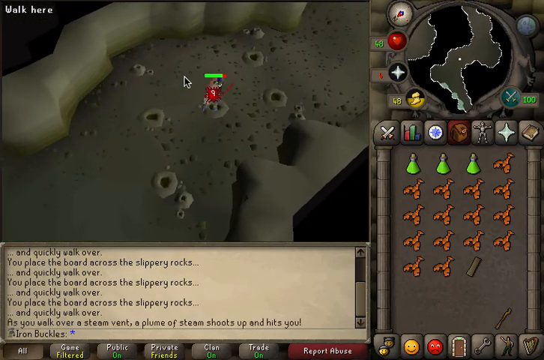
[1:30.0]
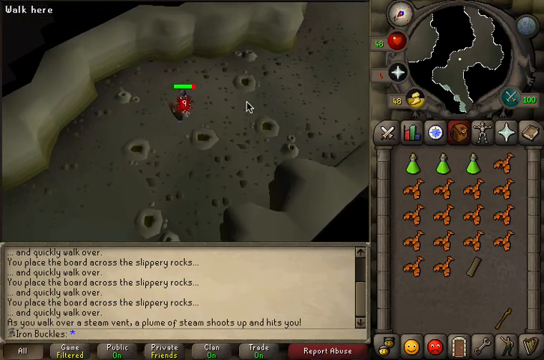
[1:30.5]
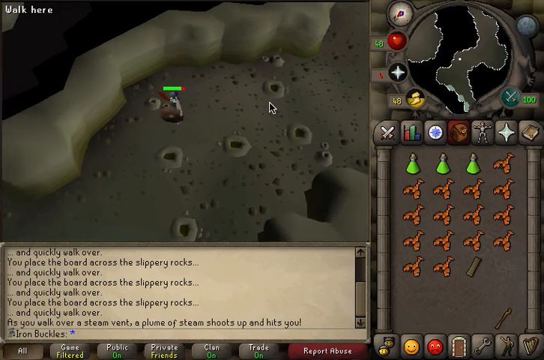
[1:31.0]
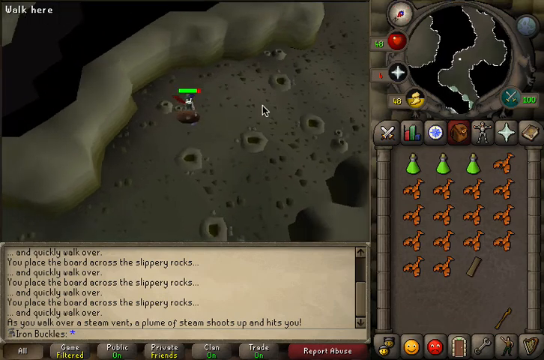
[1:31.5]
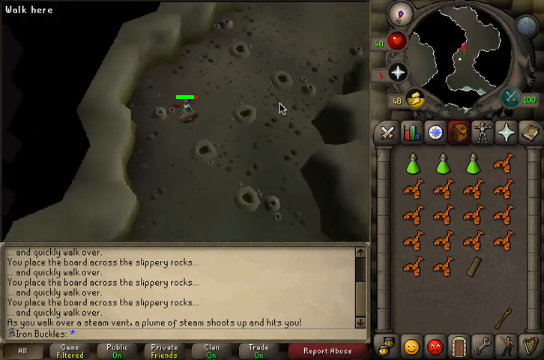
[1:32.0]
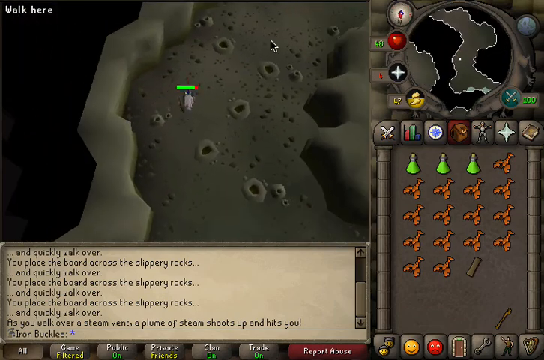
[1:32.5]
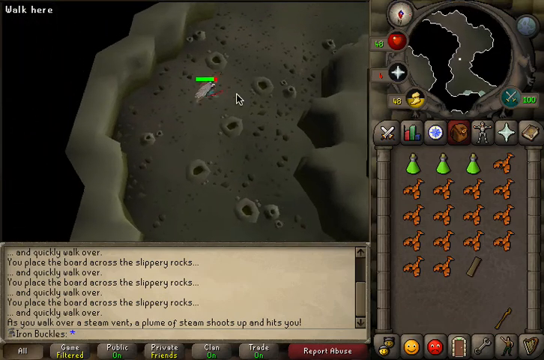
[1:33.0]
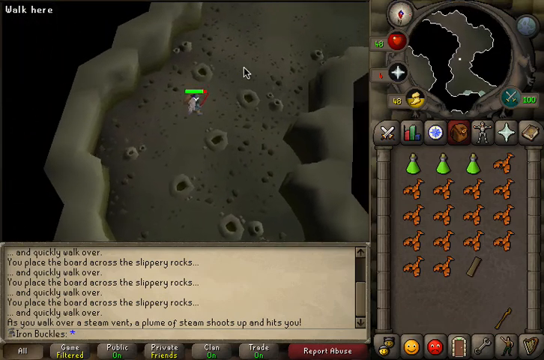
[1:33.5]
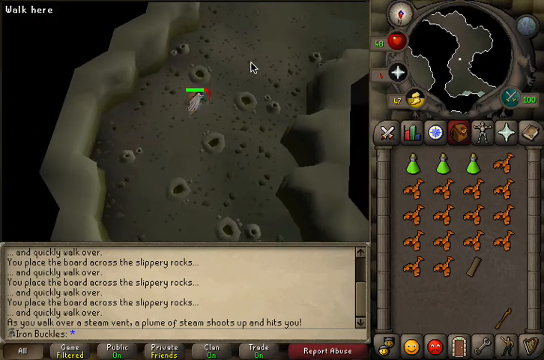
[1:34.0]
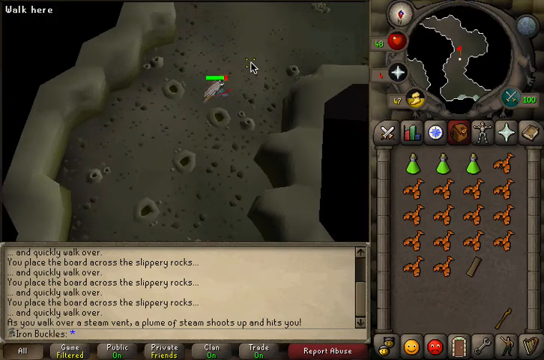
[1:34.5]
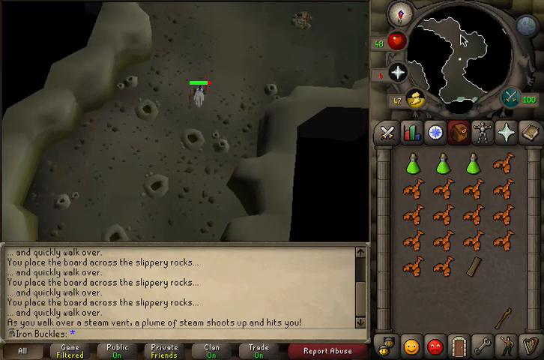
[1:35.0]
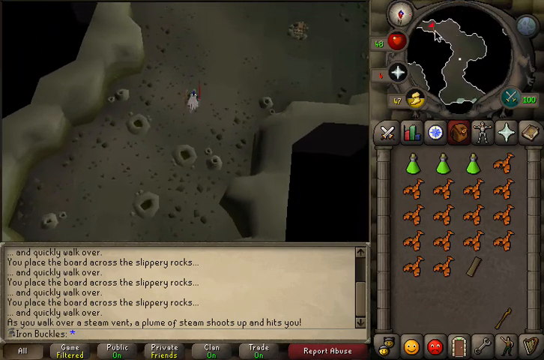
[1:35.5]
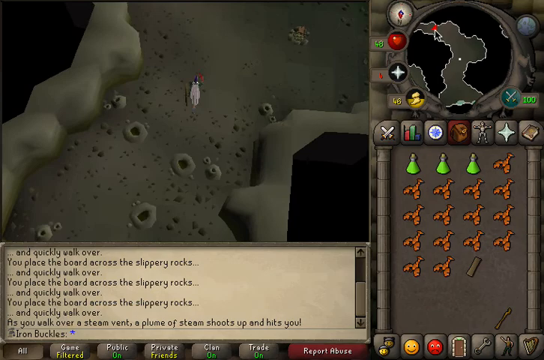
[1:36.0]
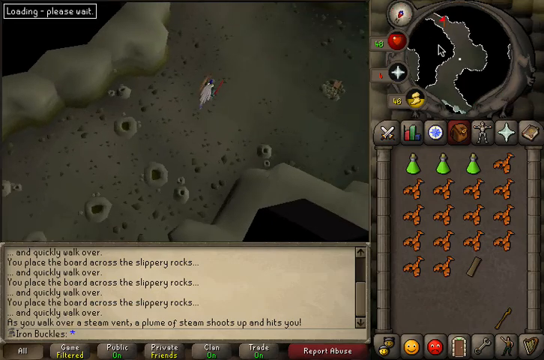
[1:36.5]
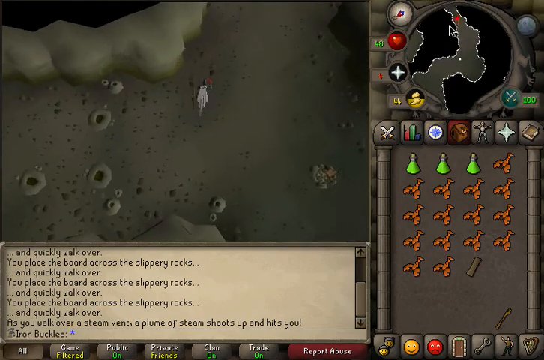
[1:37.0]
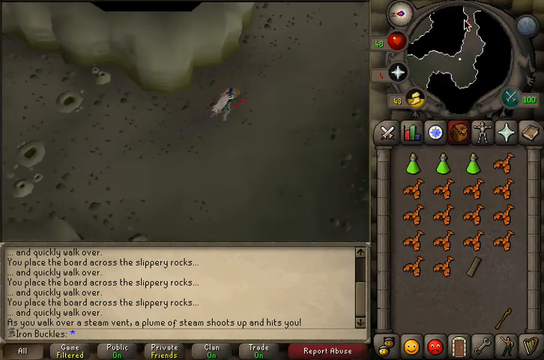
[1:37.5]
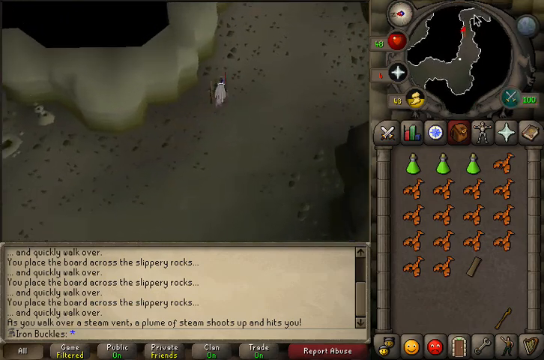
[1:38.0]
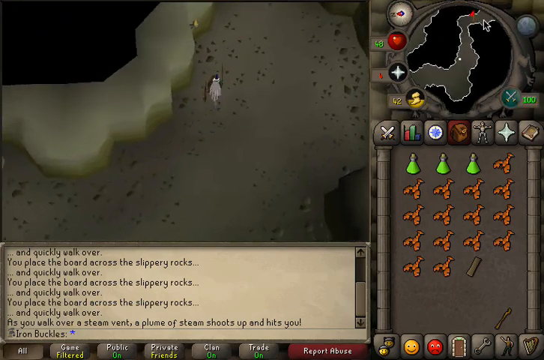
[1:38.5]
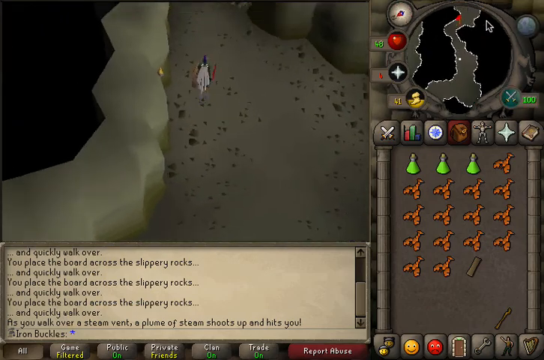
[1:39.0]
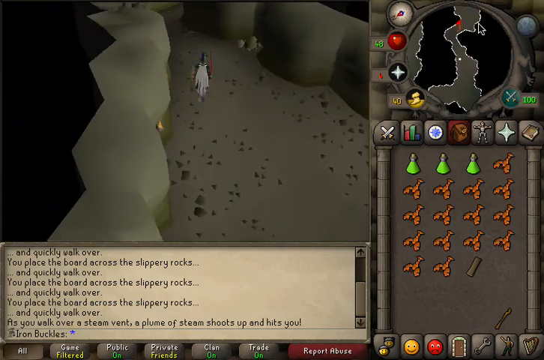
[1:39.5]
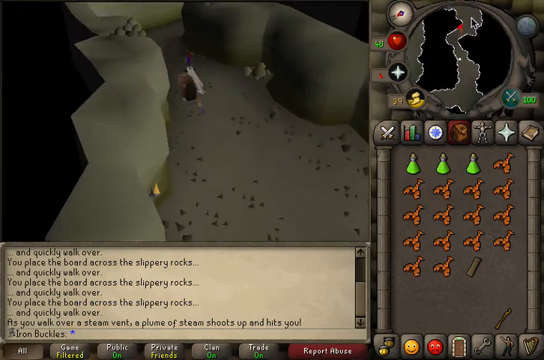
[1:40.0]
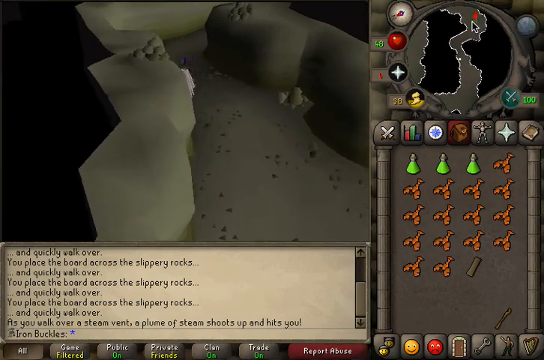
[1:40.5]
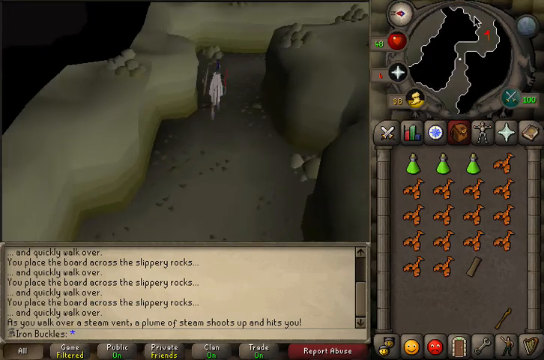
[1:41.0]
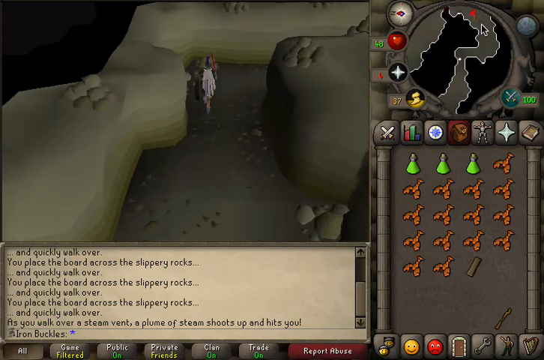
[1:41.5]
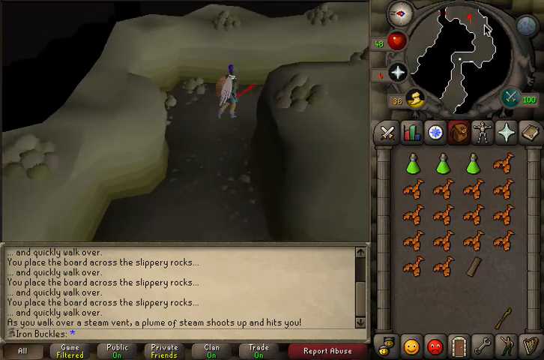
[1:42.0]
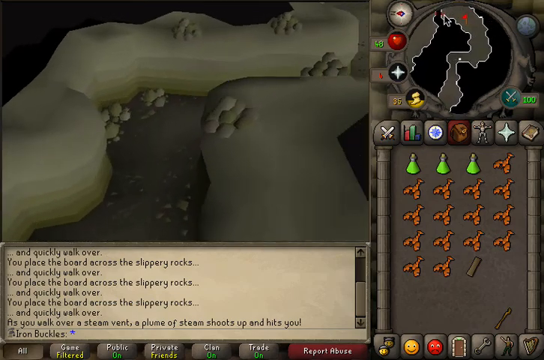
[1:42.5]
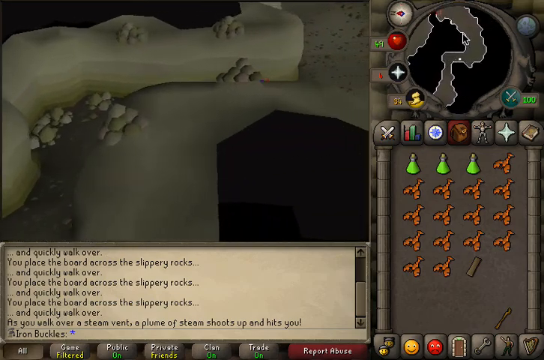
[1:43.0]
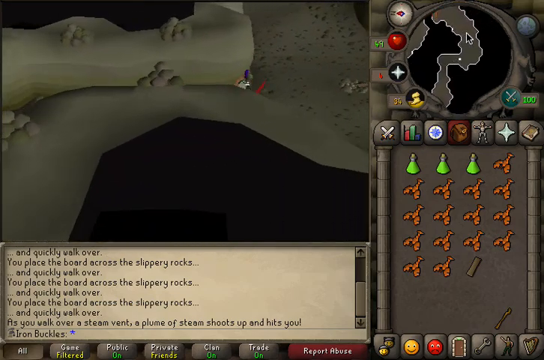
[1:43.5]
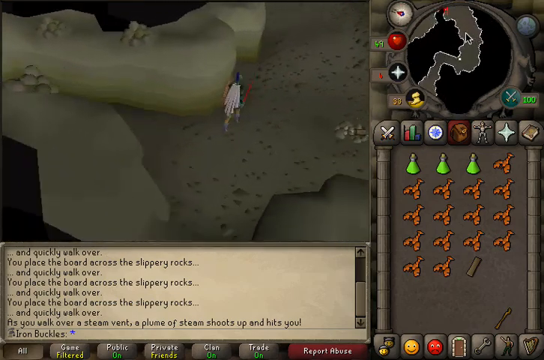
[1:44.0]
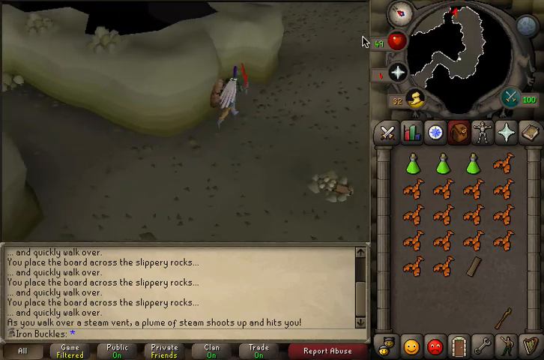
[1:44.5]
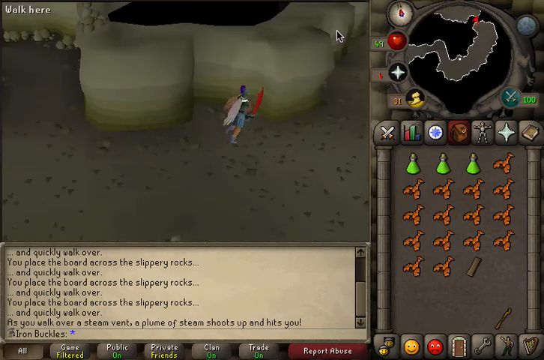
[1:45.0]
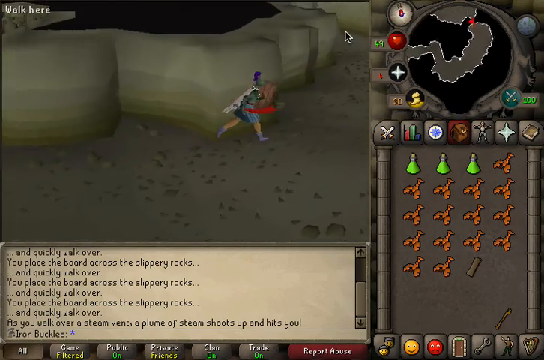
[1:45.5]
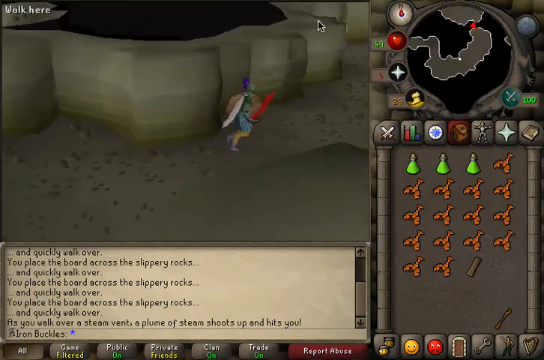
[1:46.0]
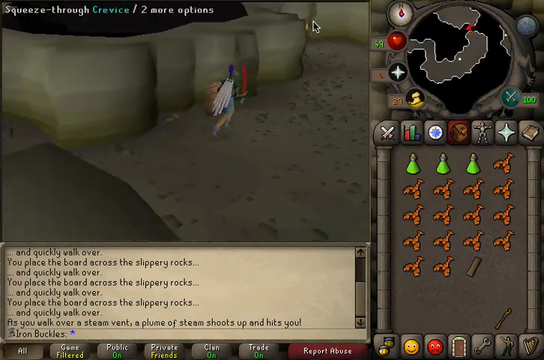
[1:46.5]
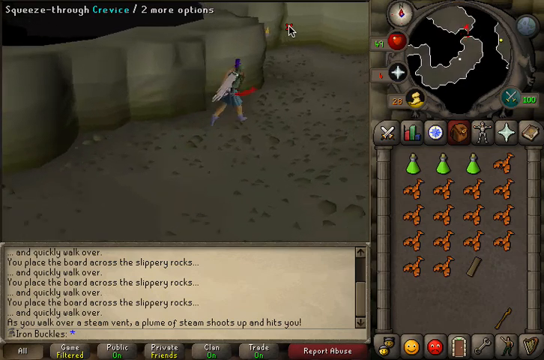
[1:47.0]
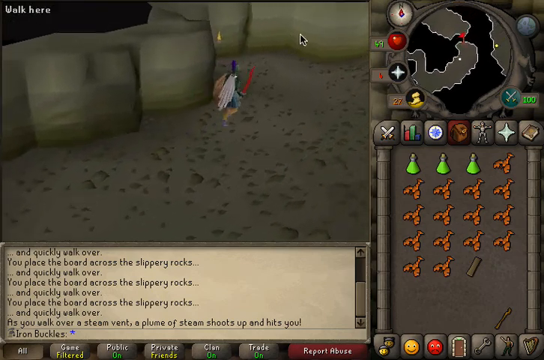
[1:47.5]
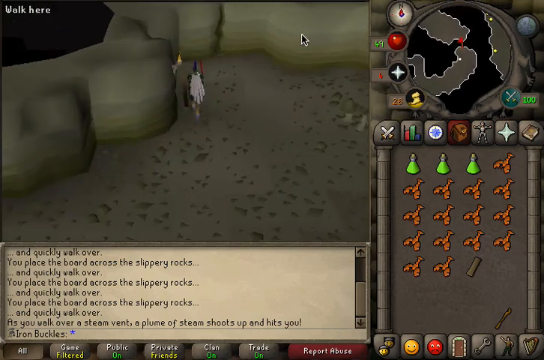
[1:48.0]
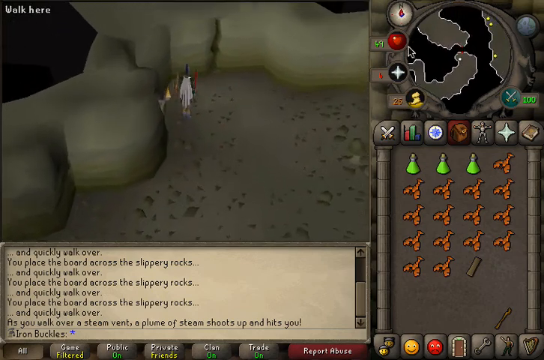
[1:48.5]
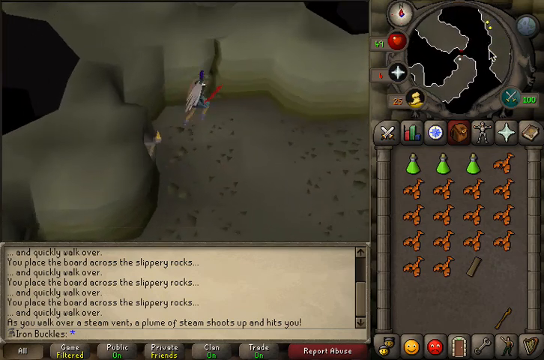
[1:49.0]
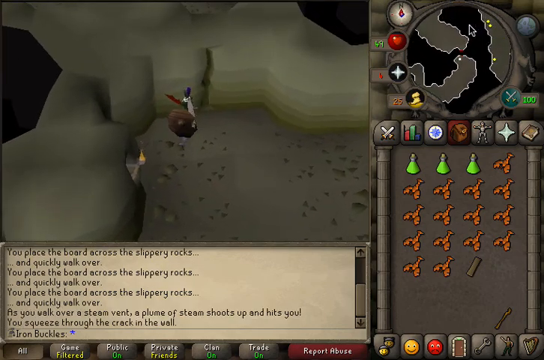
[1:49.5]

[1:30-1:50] The player appears to navigate through what seem to be gushers, holes in the ground that spew out something like hot water. The character gets past these obstacles and continues on, with the mouse directing them on the map up top. The number by the gold footsteps icon goes down considerably as they move along. The little communication screen at the bottom of the HUD says "you place the board across the slippery rocks and quickly walk over," recording what is done as the character clicks on the plank and sets it down to walk over.